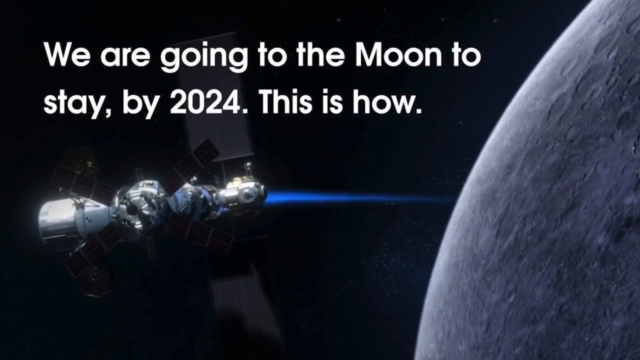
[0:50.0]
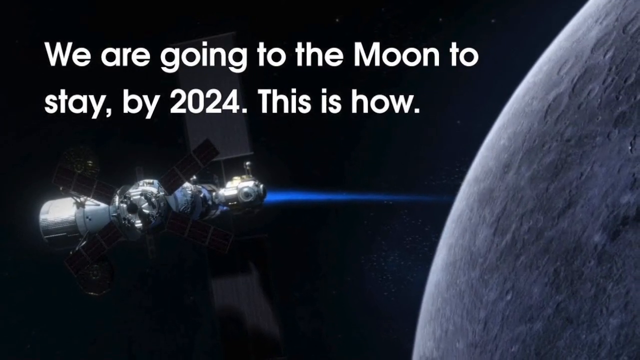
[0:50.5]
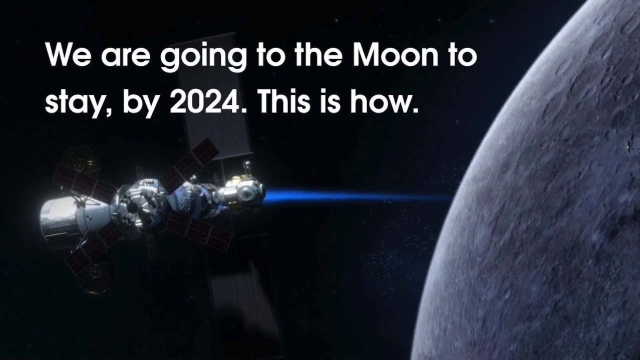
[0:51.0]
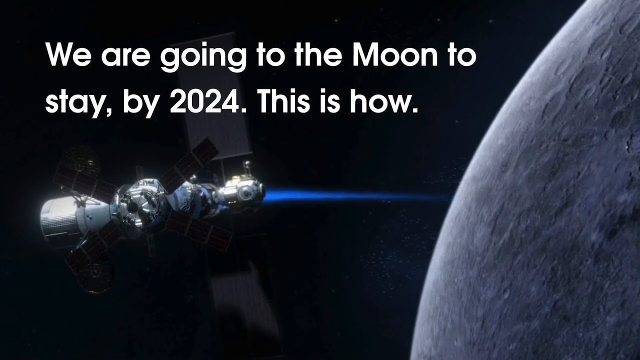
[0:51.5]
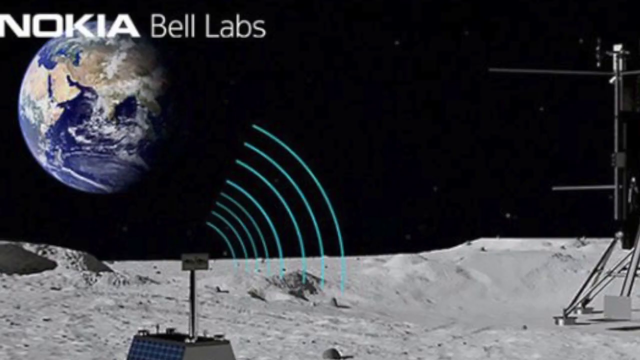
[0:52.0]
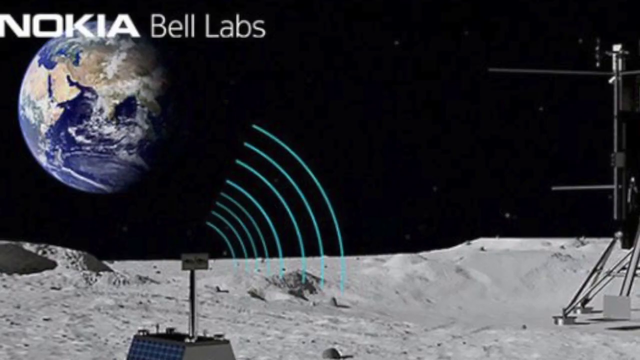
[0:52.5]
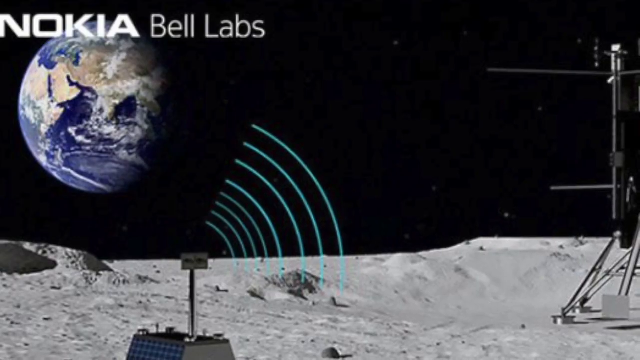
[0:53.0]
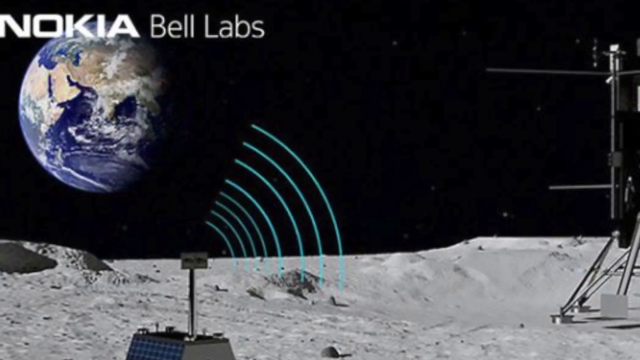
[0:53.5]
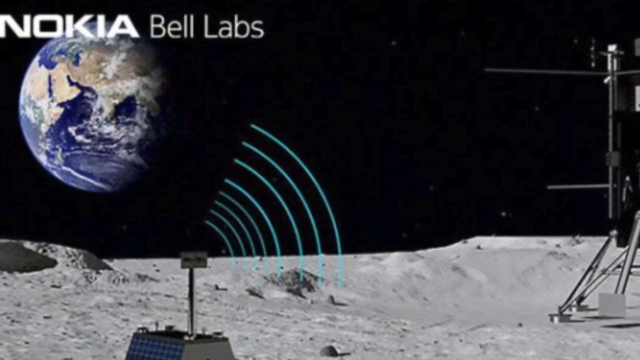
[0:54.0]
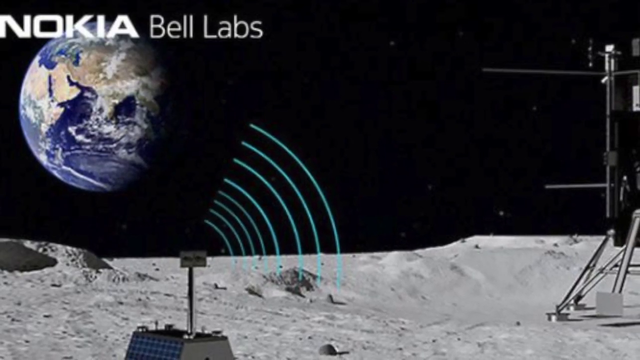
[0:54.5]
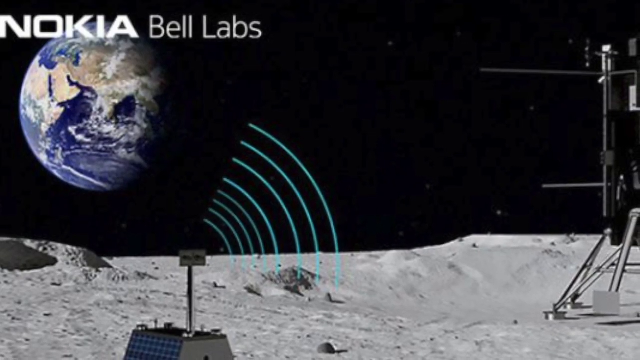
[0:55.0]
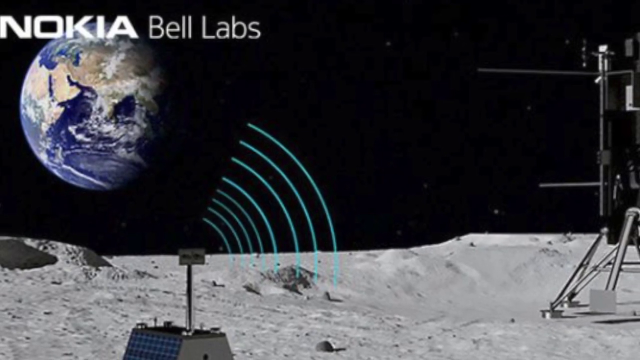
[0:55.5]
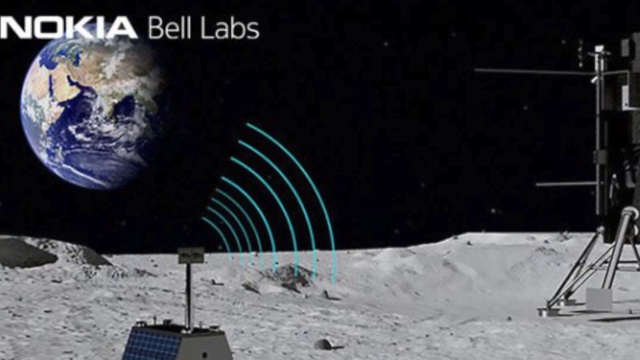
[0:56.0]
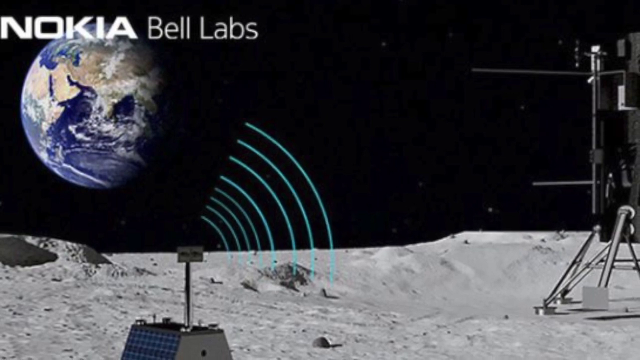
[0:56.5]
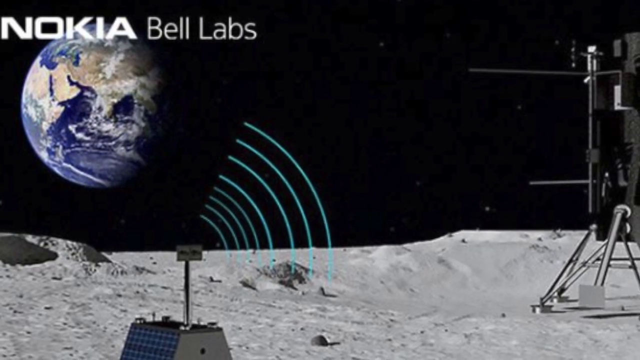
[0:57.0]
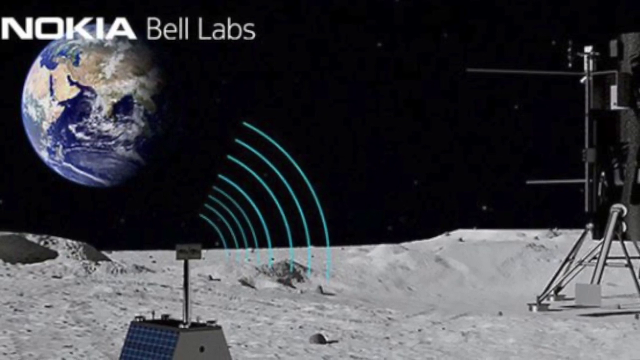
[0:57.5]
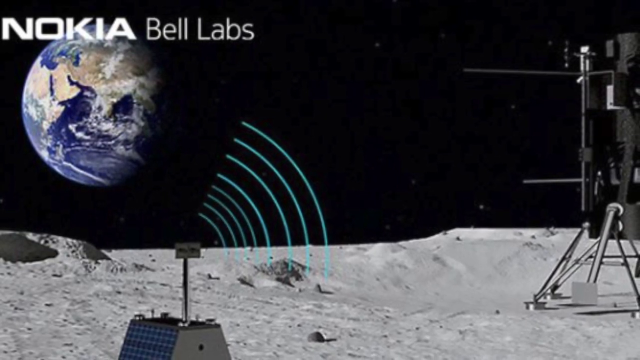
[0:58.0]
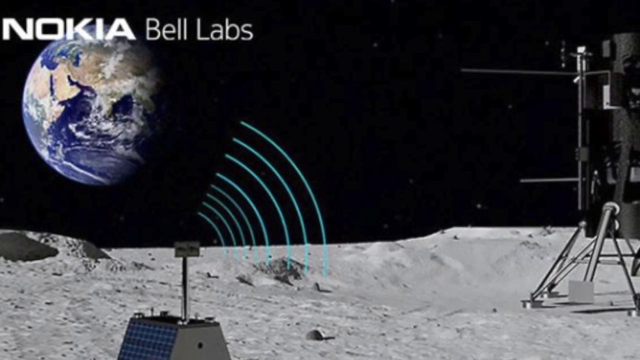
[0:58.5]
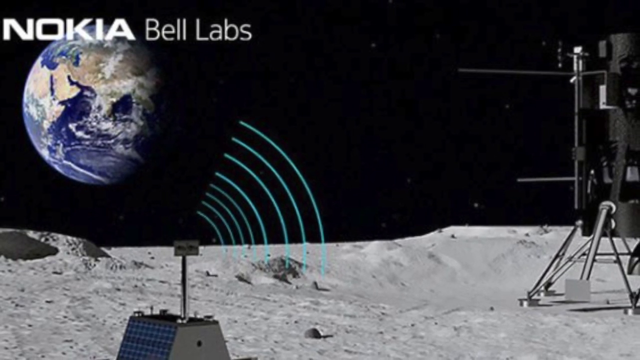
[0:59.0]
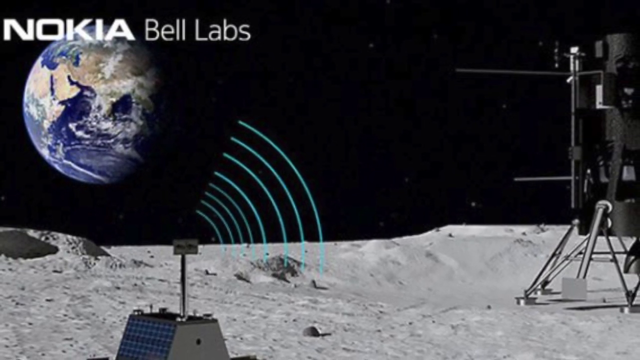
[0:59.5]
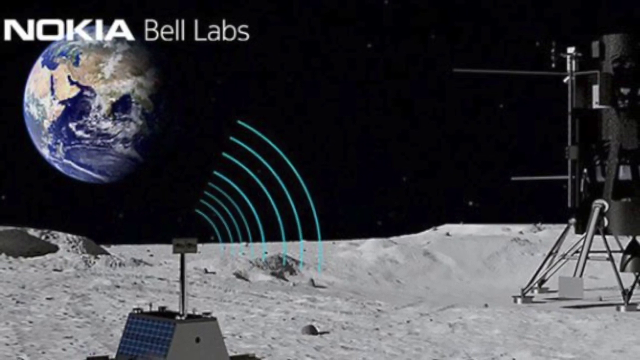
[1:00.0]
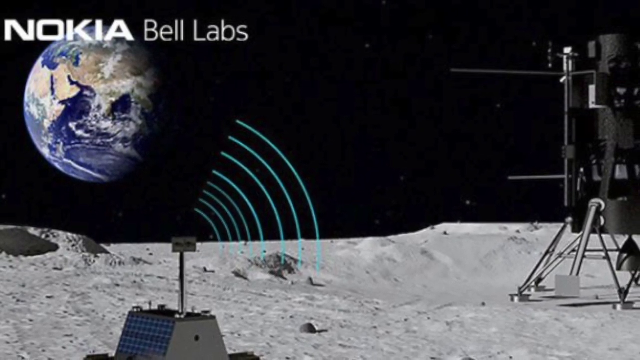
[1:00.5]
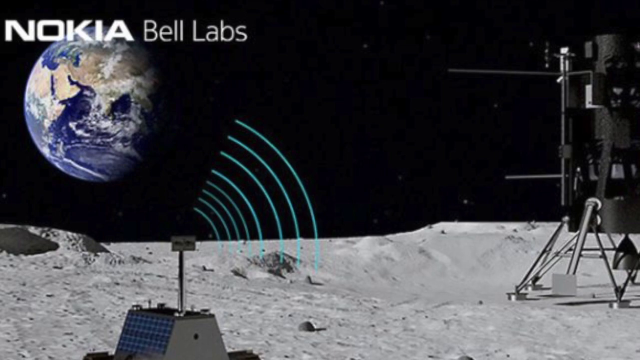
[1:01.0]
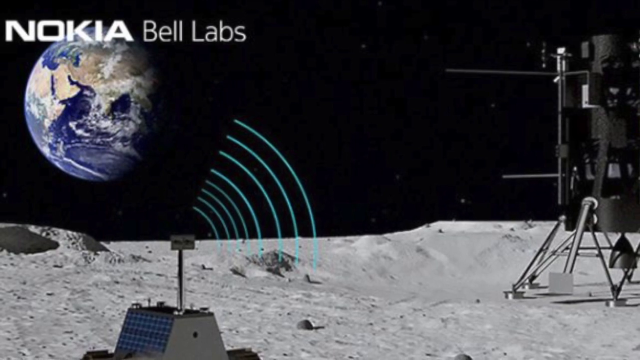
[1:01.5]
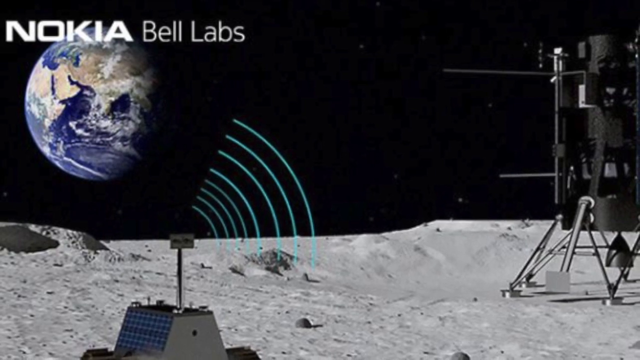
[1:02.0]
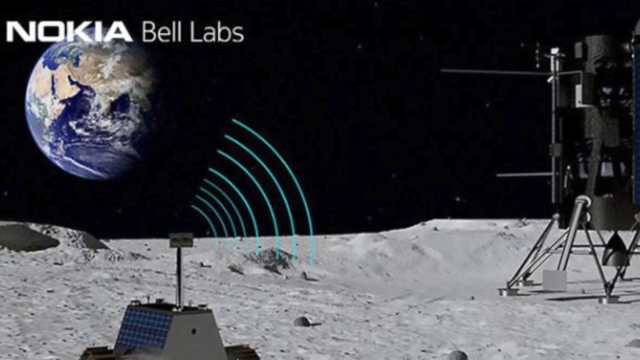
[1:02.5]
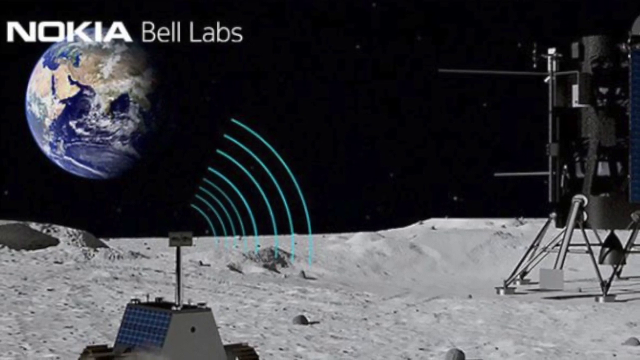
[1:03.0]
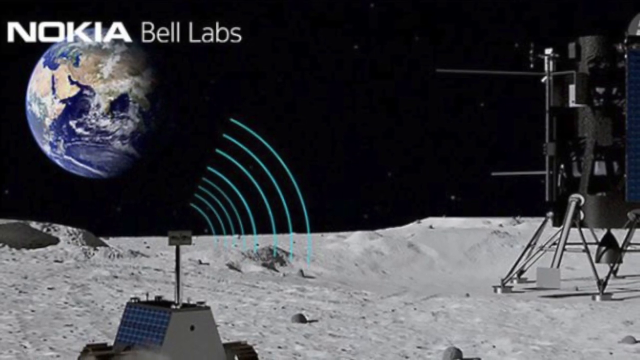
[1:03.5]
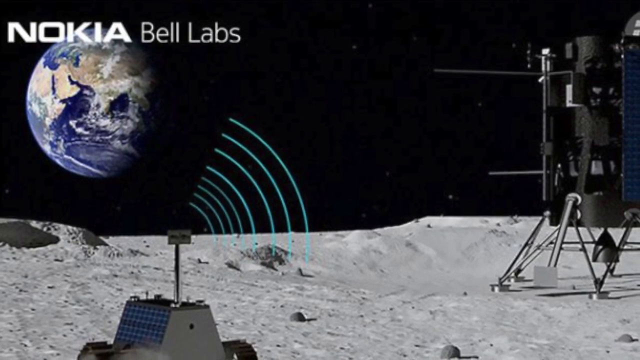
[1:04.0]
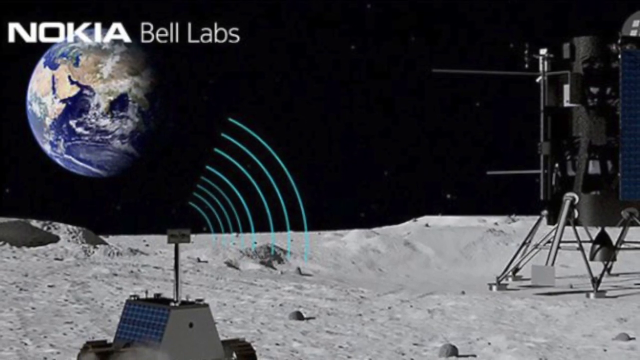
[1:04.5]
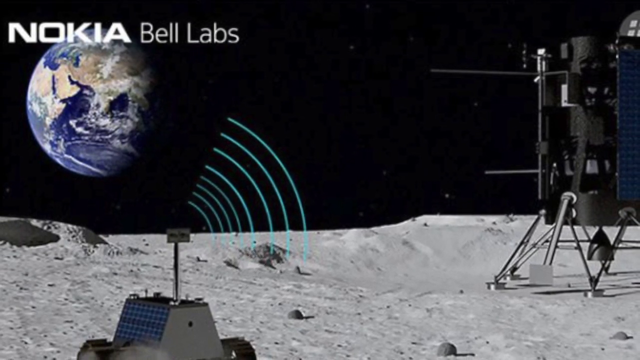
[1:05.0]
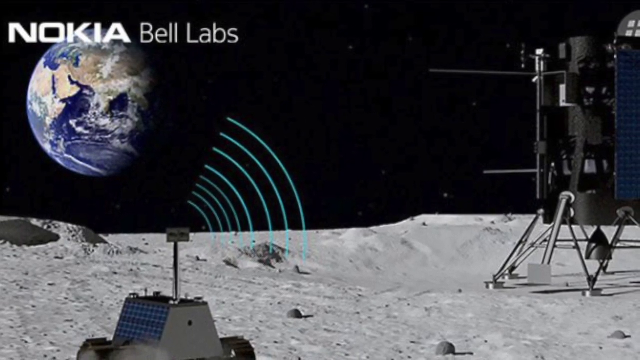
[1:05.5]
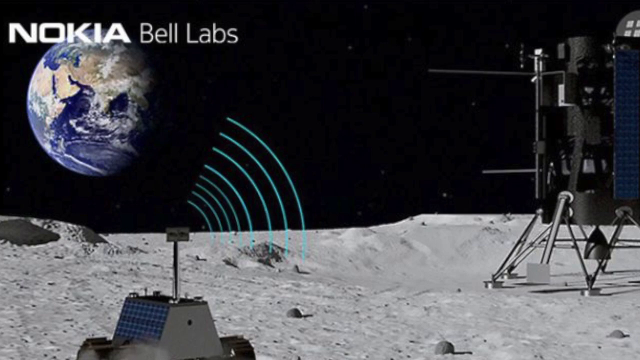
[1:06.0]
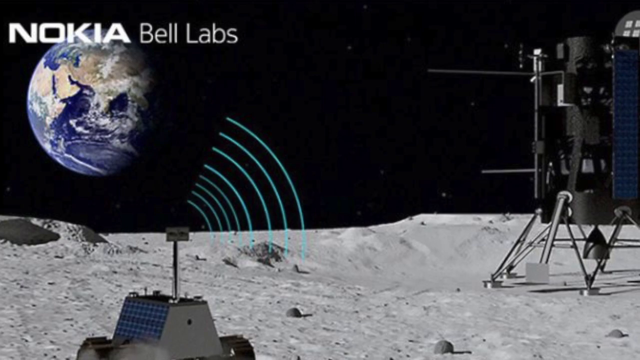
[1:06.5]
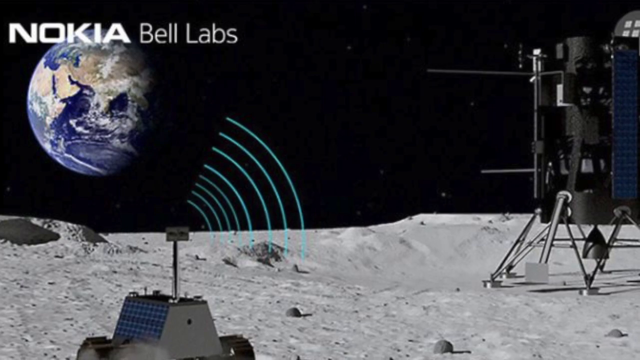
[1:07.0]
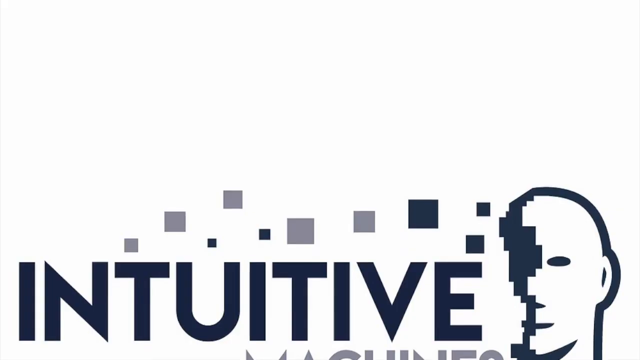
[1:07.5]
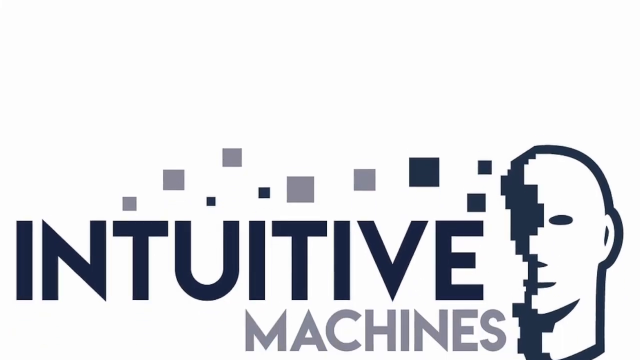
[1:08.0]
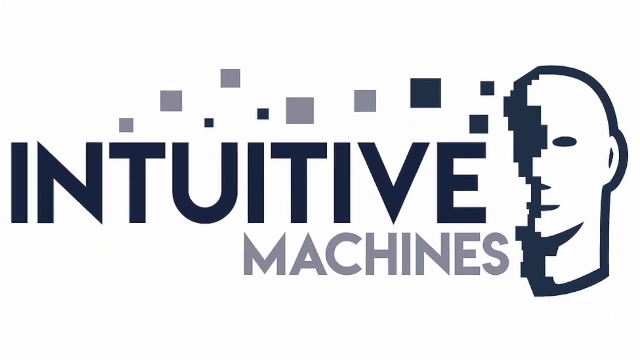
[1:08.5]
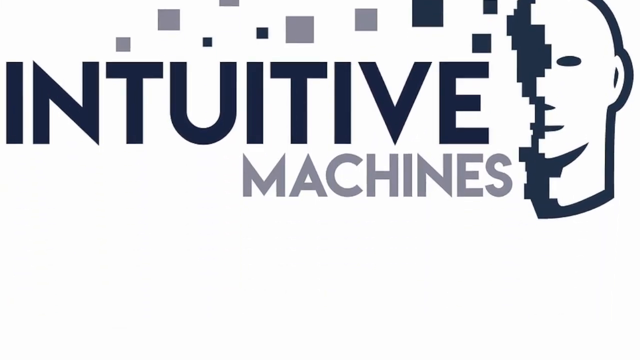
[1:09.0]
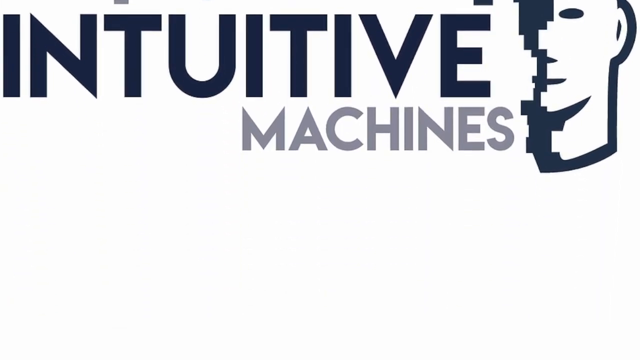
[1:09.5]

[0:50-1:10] A satellite in outer space points at the moon and shoots some kind of blue light directly at it. A small piece of the moon is visible on the right side of the screen, along with white text reading "we are going to the moon to stay by 2024. This is how". The camera zooms out. The scene changes to one with "Nokia Bell Labs" in the upper left corner and Earth in the background; the viewpoint appears to be on the moon. The image shows the moon's surface with some sort of machine planted into the ground, with lots of audio waves coming out of its top; it is some kind of drawing or 3D diagram. Some sort of satellite contraption or device is on the right side of the screen. The camera zooms out very slowly, revealing more of the machine on the right, which looks like some sort of receiver or networking device; the box at its bottom is an antenna shooting waves into the sky. The zoom-out continues until suddenly a white screen appears reading "intuitive machines", with an image of half of a face on the right side, and it scrolls up. Very briefly, an image of some sort of receiver on the moon is shown.